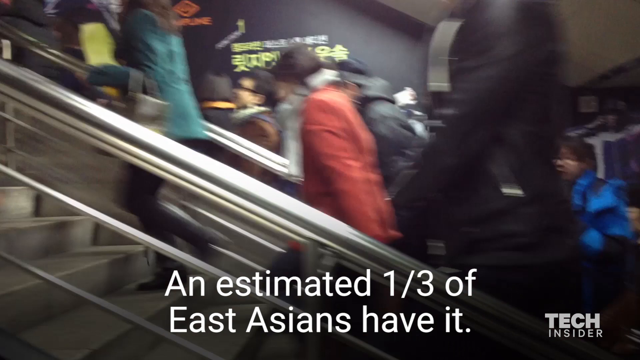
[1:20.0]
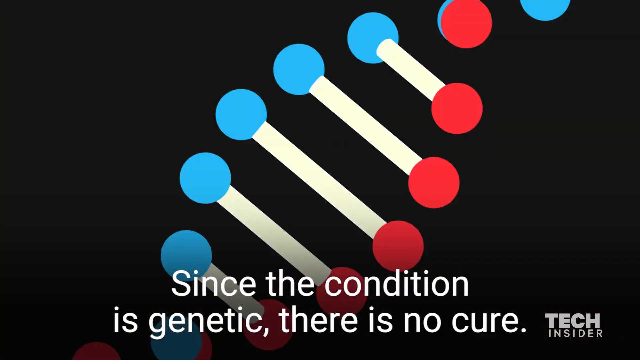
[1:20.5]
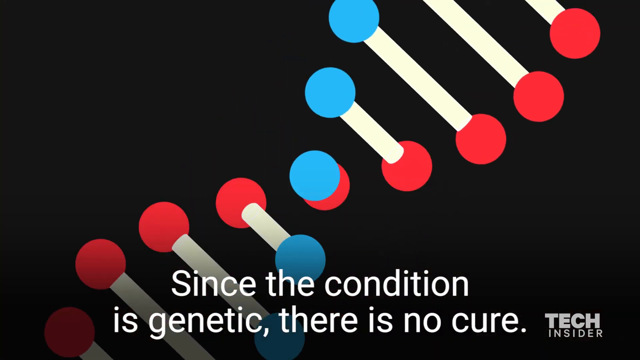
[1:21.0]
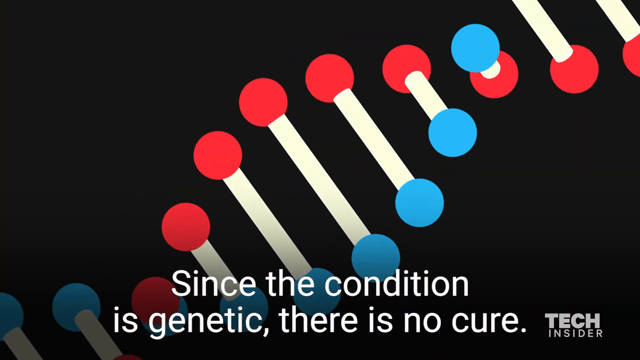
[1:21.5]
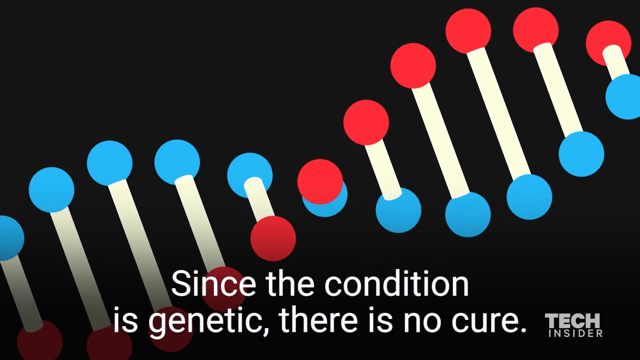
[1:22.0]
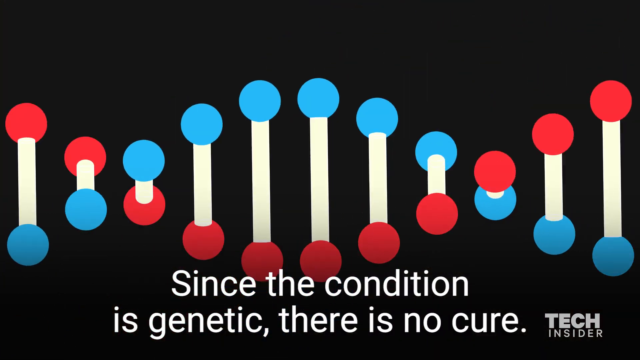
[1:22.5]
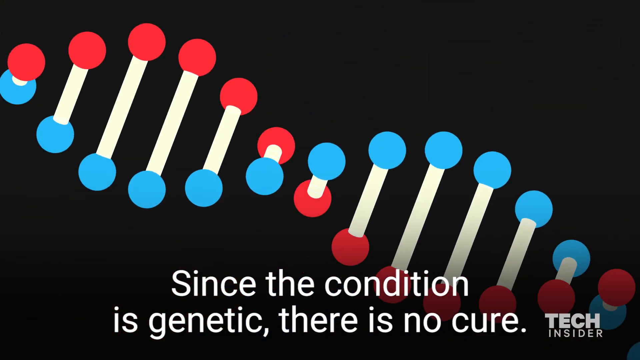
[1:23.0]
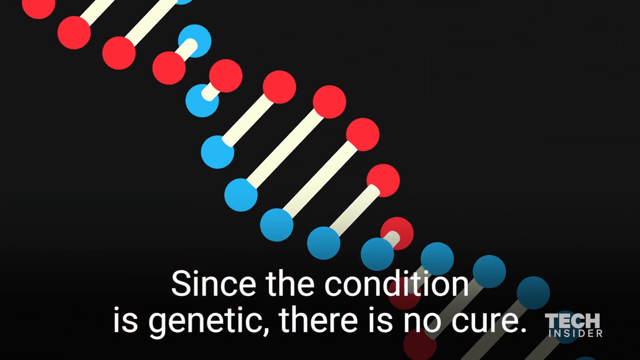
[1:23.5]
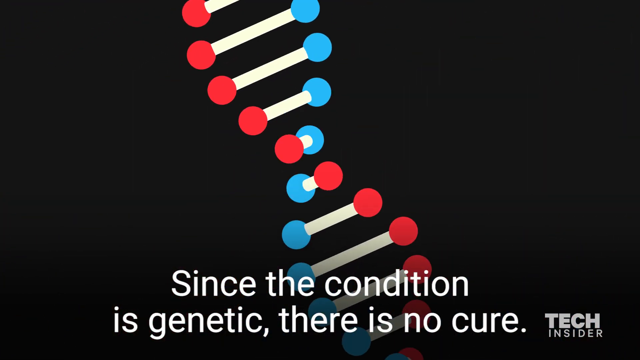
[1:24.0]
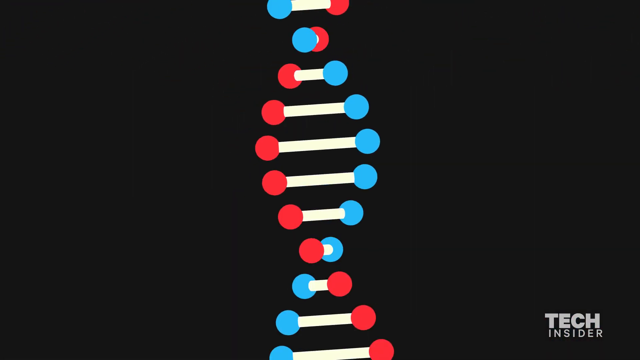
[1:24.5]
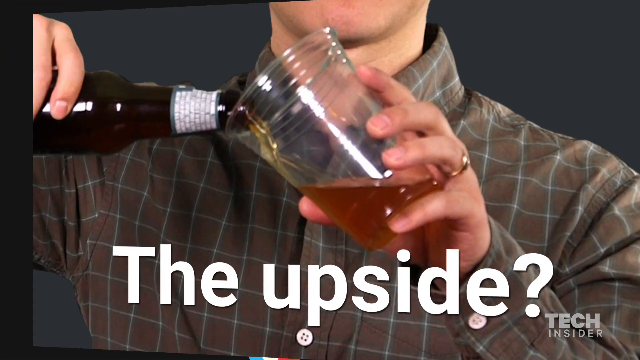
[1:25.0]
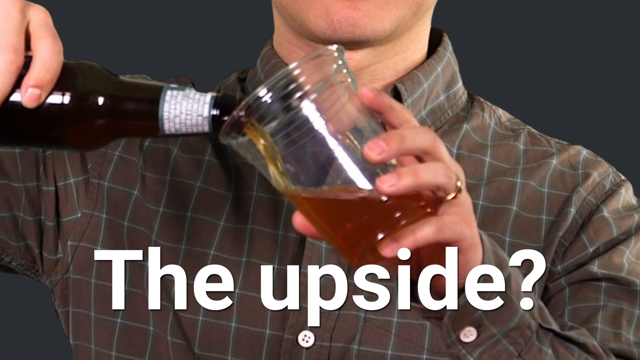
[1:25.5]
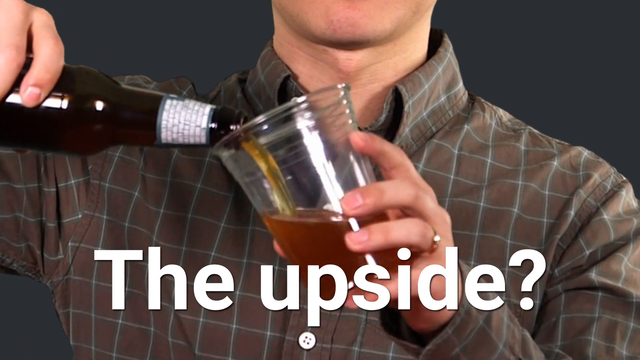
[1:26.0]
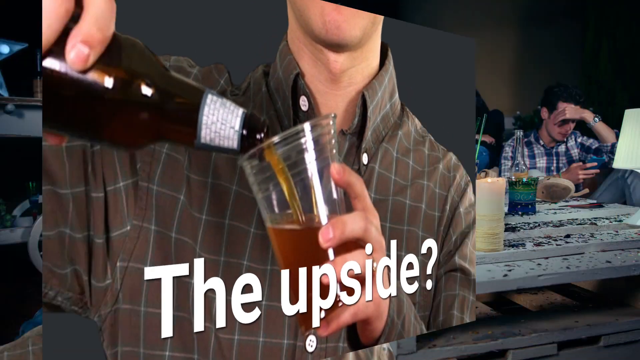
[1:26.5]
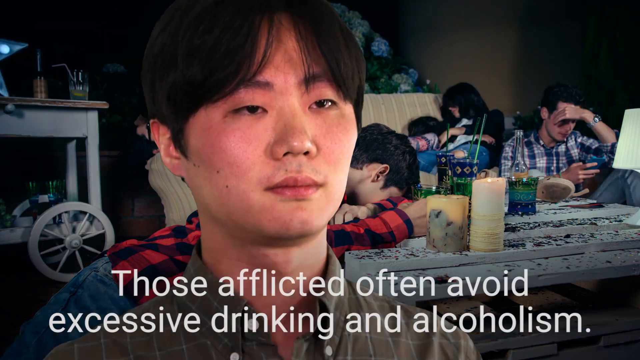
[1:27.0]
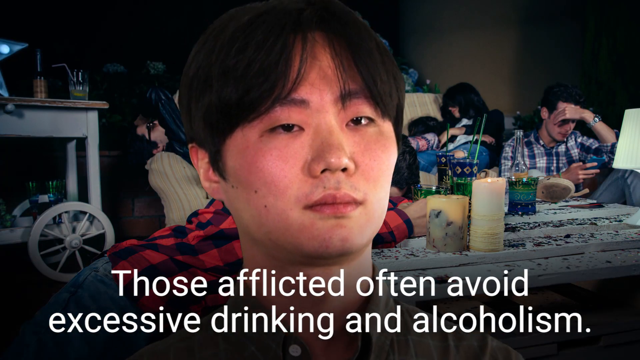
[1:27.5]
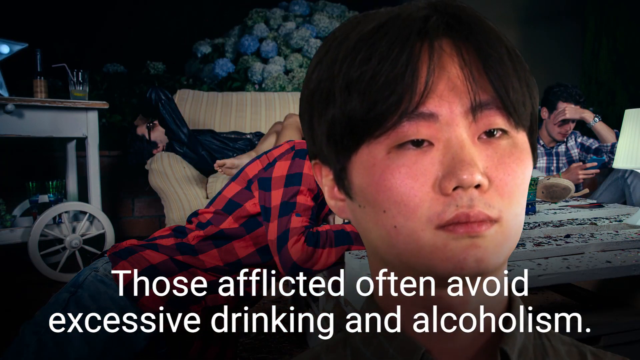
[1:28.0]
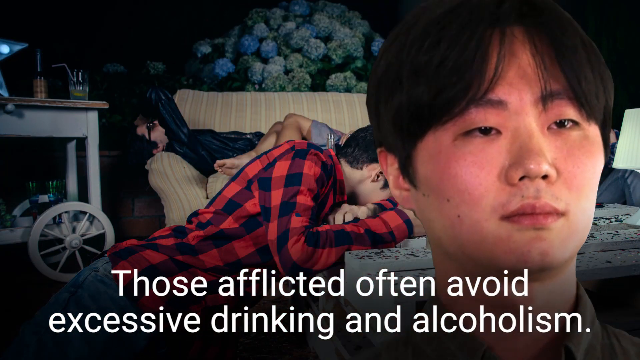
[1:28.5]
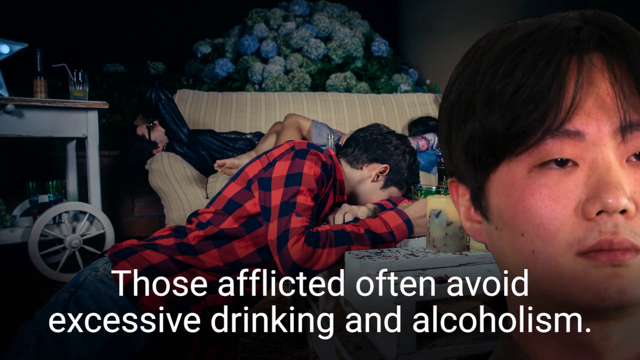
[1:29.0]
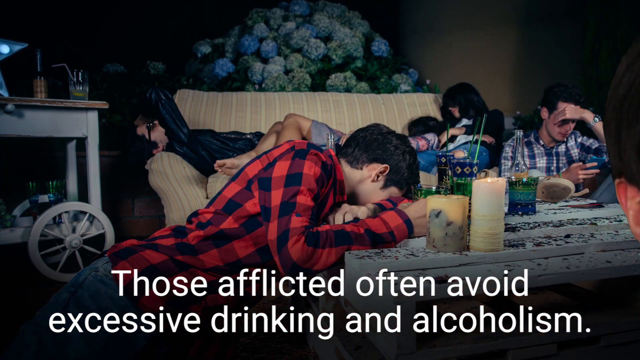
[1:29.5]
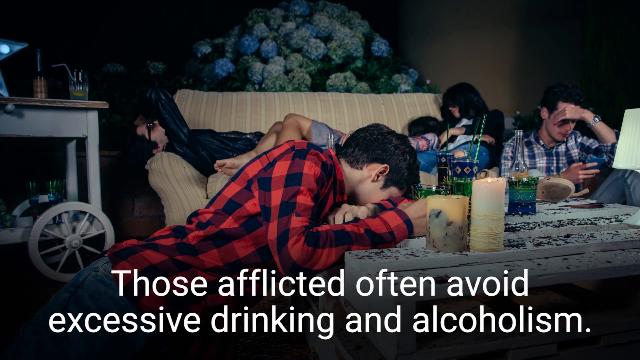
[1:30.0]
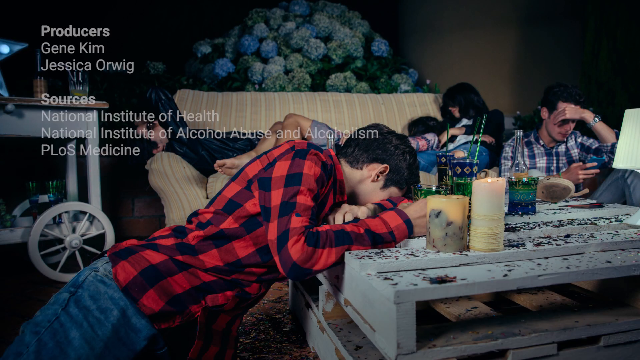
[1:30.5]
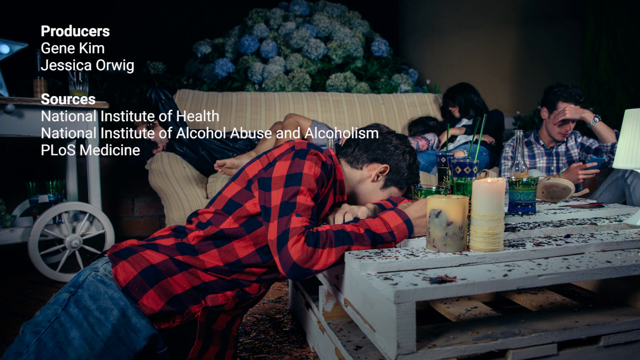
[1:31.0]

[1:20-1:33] Numerous people climb steps or an escalator that stretches from the lower right corner of the screen to the upper left. White text across the bottom reads "since the condition is genetic there is no cure". A black screen follows with a red, white and blue animation of a DNA chain running diagonally from the lower left corner to the upper right. The chain has red circles on one end and blue on the other, with white sticks connecting the dots; the white sticks rotate and then flip around in a clockwise direction. The footage returns to a man pouring an alcoholic drink into a glass, with only his chin, neck and chest visible. He holds the glass in his left hand and a bottle of drink in his right and fills the glass. He wears a brown checkered shirt, and white text across the bottom reads "the upside". The head of the same man then appears in the centre of the shot, and the text reads "those afflicted often avoid excessive drinking and alcoholism". Behind the man's head is a photo of a family or group of people gathered around a table with a sofa in the background; they look sad or tired. To the left, a man in a red and black shirt seems to be passed out on the table, his head resting on his left arm. To the far right, a man in a blue and white shirt holds his phone in his right hand while his left hand rests on his forehead. The face of the man in front of the picture gradually moves to the right of the screen and disappears. White text then appears over the image of the group around the table: "Producers, Gene Kim, Jessica Orwig, Sources, National Institute of Health, National Institute of Alcohol Abuse and Alcoholism, PLOS Medicine".